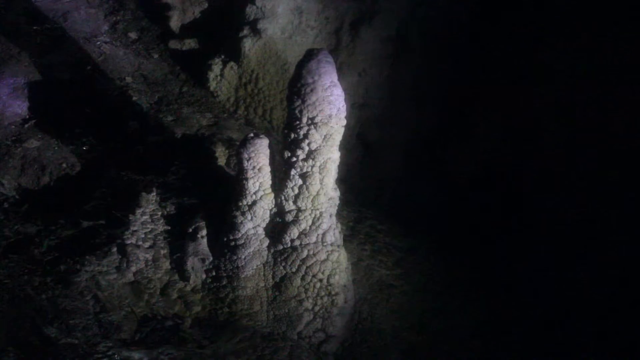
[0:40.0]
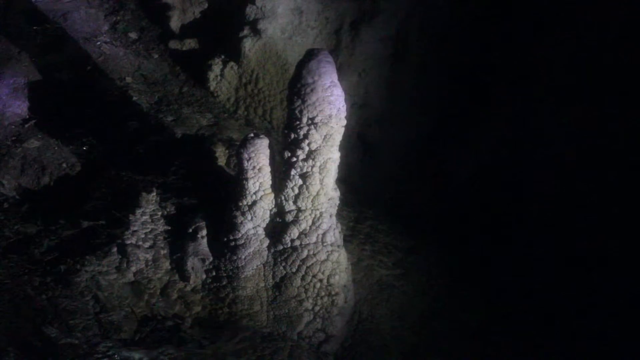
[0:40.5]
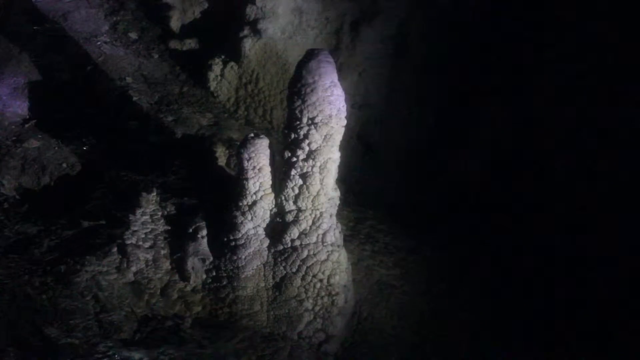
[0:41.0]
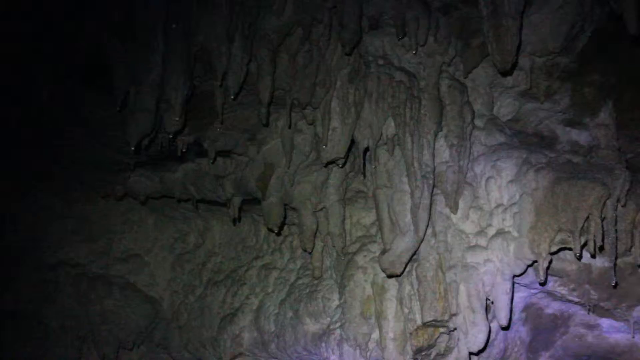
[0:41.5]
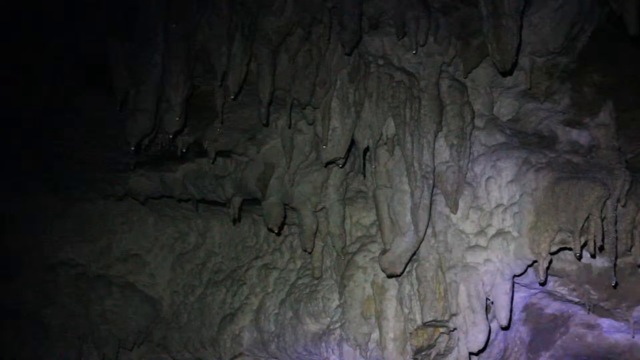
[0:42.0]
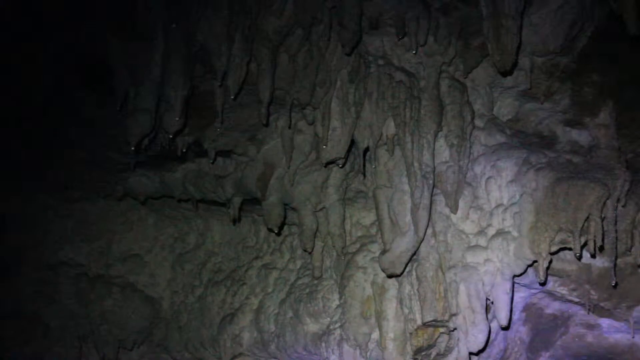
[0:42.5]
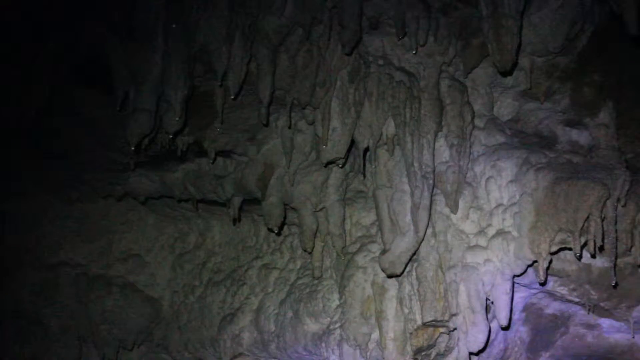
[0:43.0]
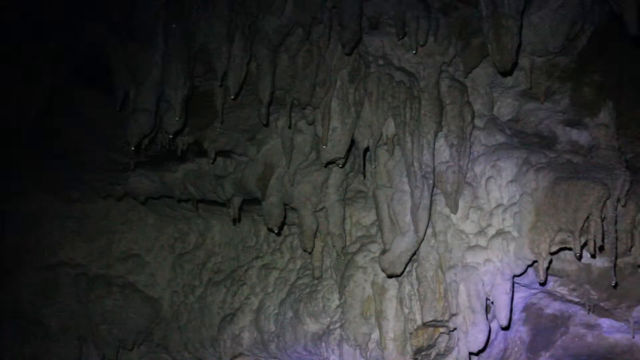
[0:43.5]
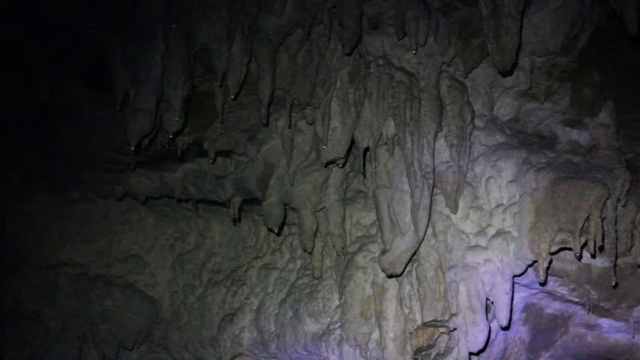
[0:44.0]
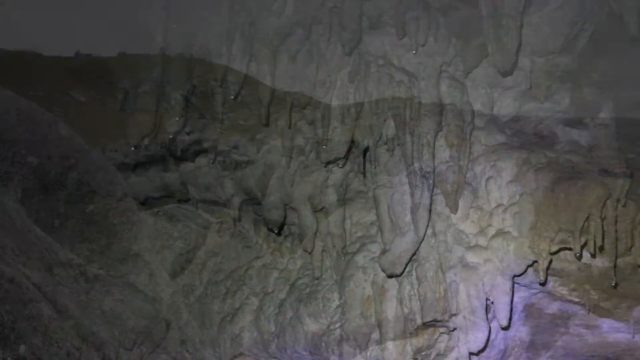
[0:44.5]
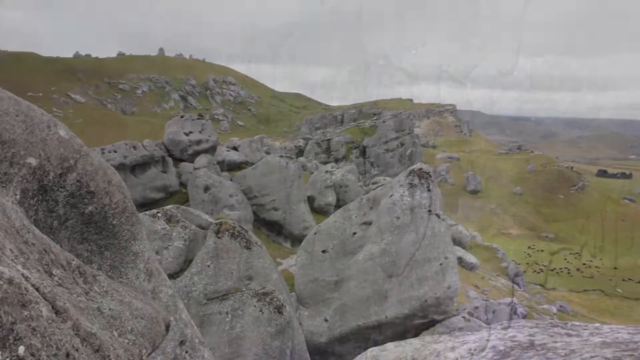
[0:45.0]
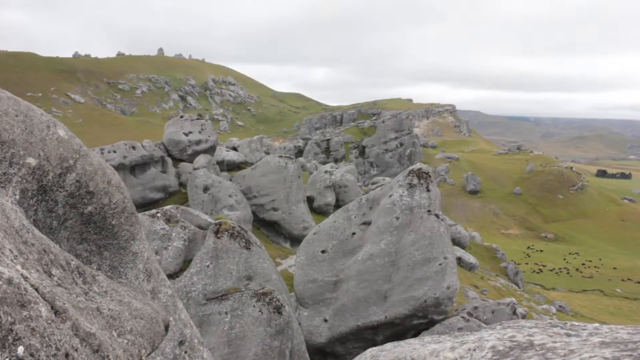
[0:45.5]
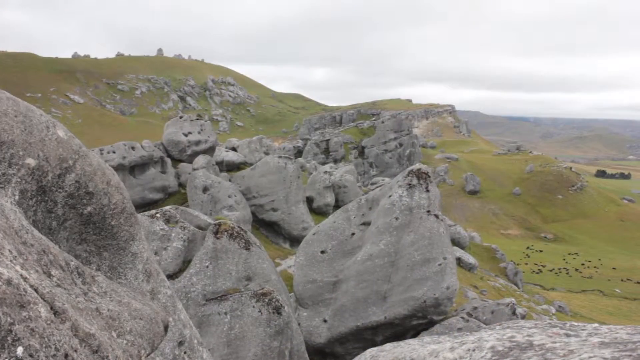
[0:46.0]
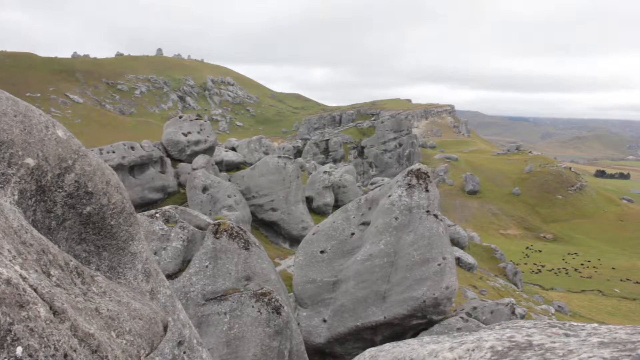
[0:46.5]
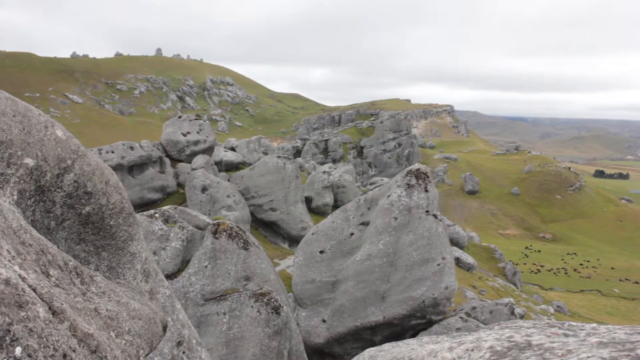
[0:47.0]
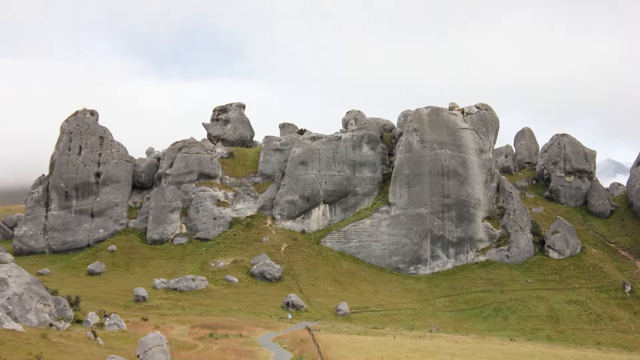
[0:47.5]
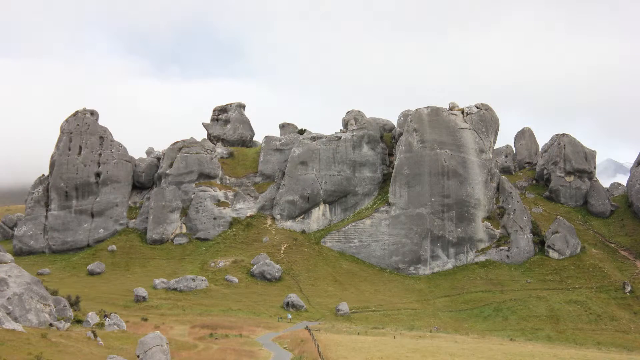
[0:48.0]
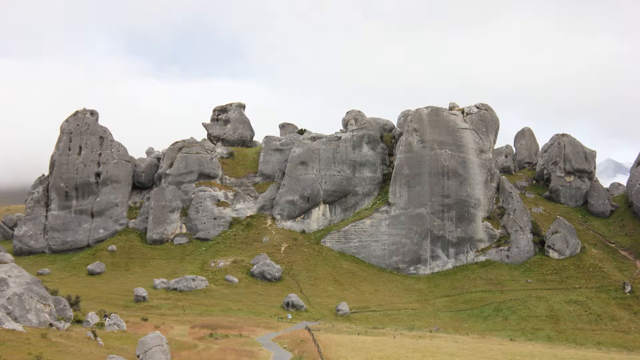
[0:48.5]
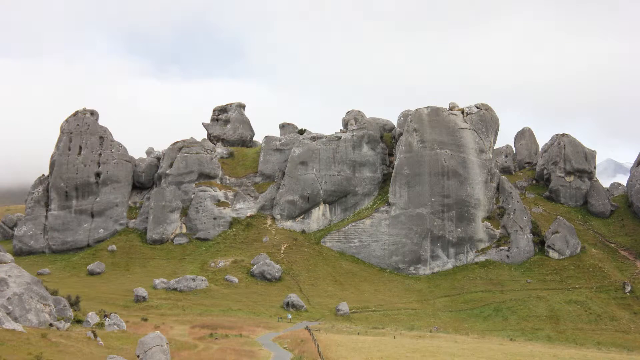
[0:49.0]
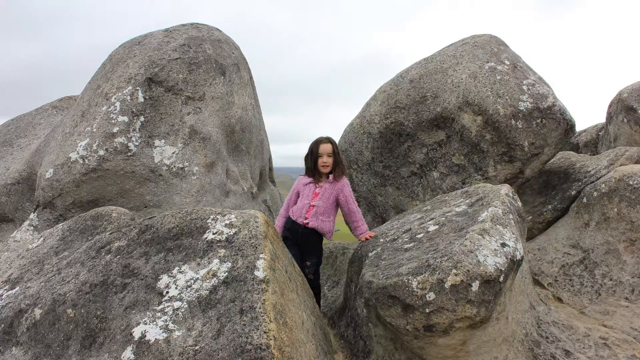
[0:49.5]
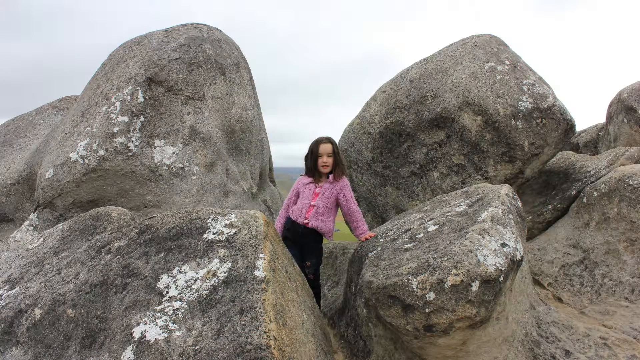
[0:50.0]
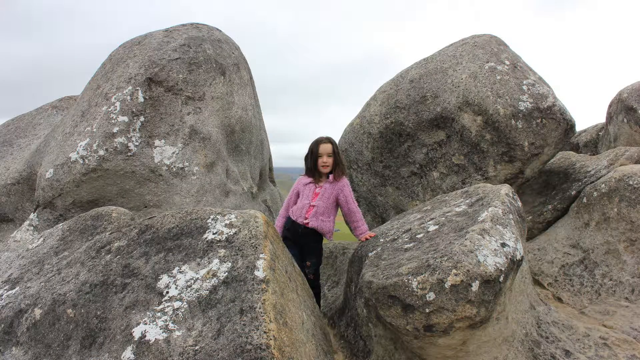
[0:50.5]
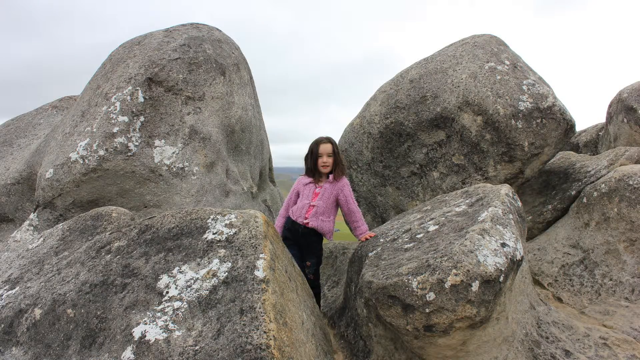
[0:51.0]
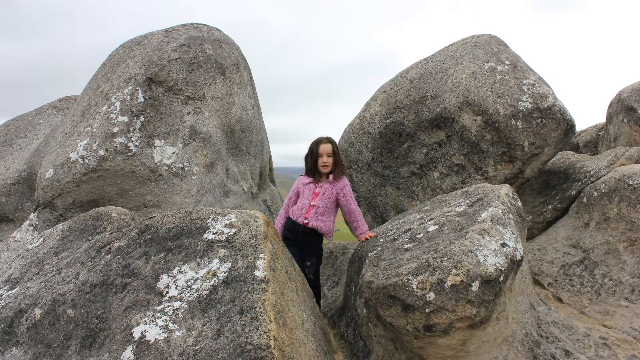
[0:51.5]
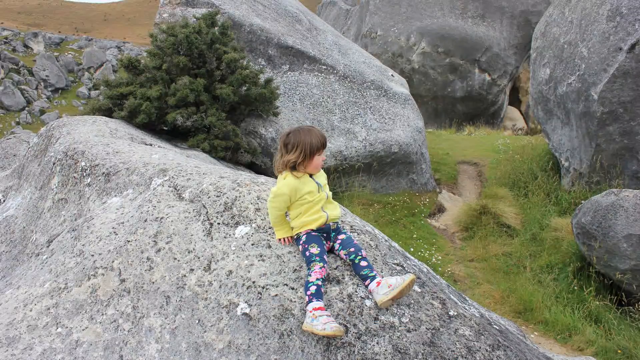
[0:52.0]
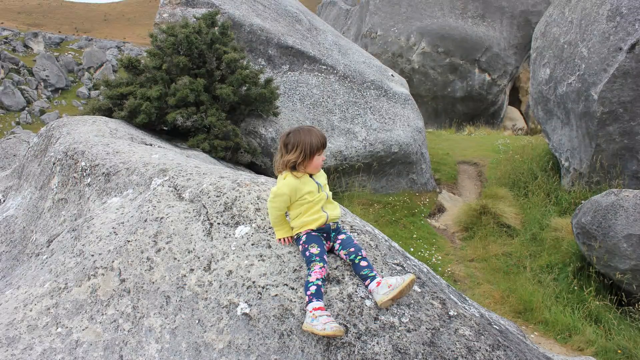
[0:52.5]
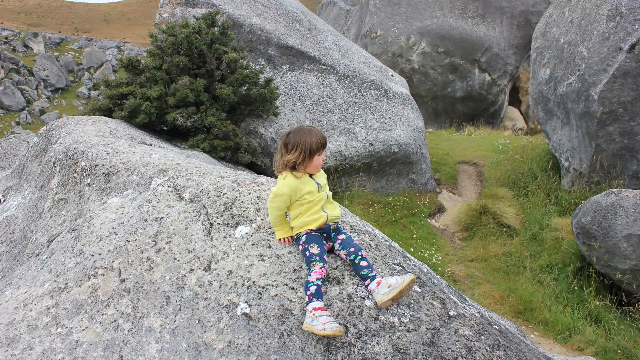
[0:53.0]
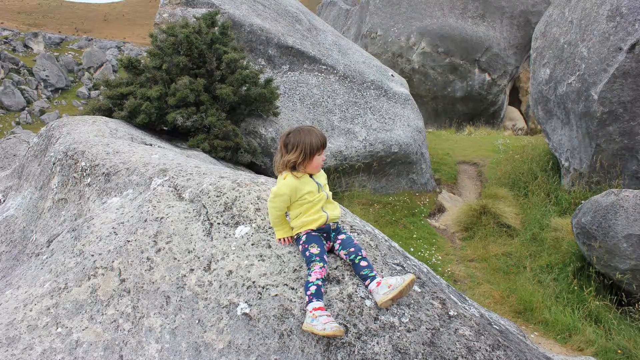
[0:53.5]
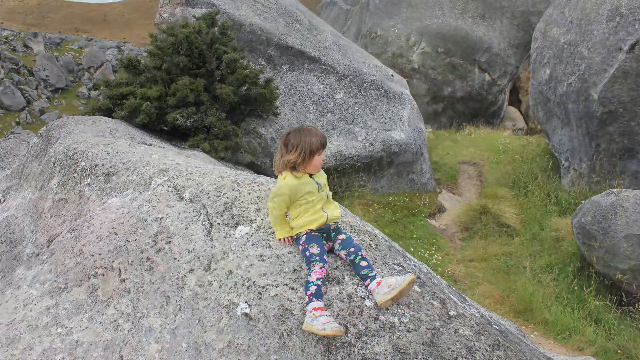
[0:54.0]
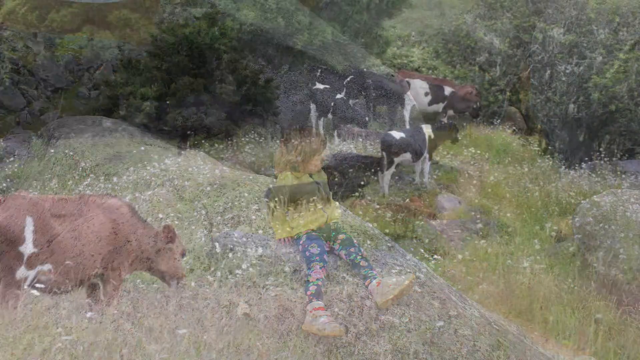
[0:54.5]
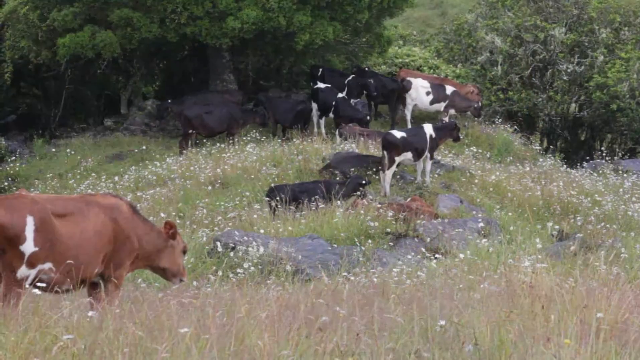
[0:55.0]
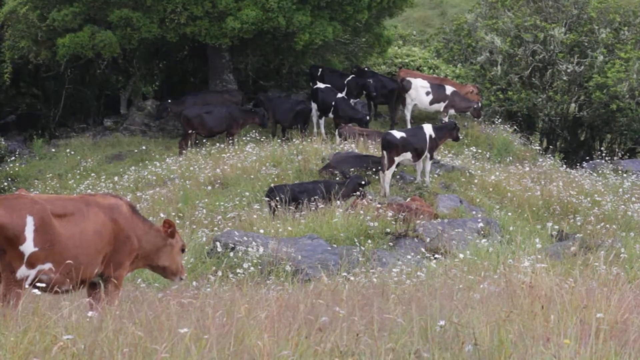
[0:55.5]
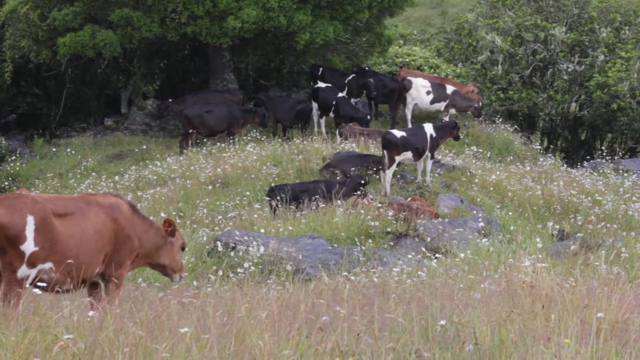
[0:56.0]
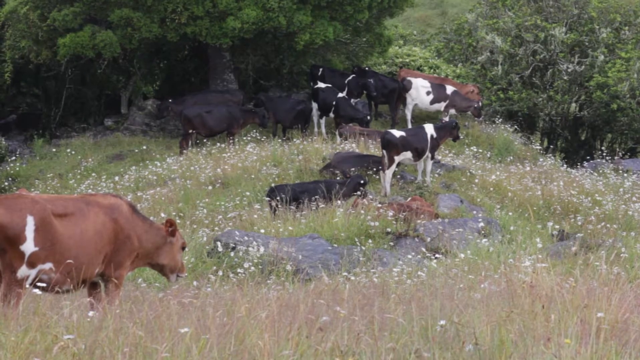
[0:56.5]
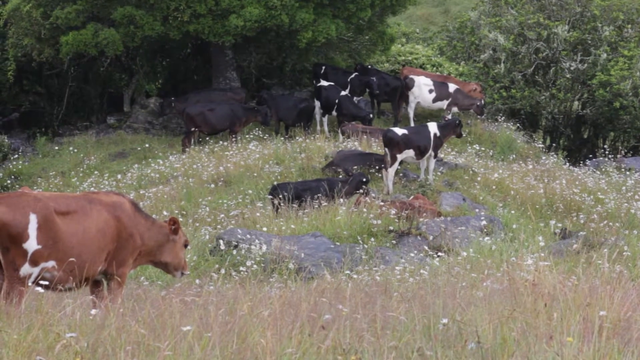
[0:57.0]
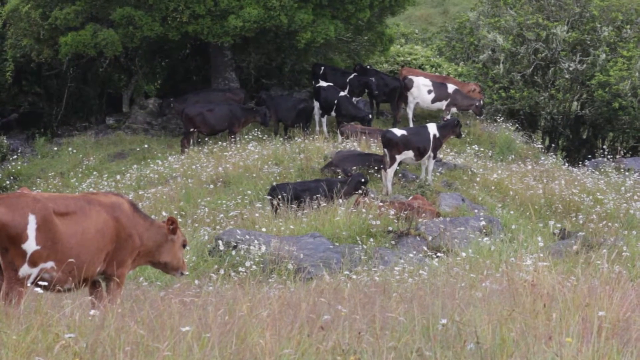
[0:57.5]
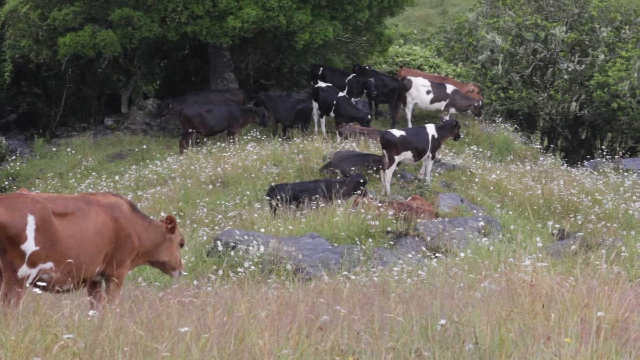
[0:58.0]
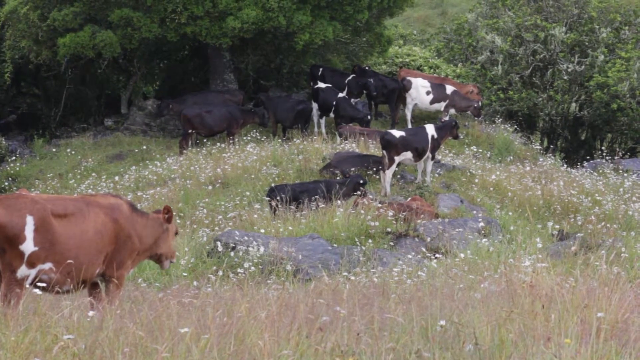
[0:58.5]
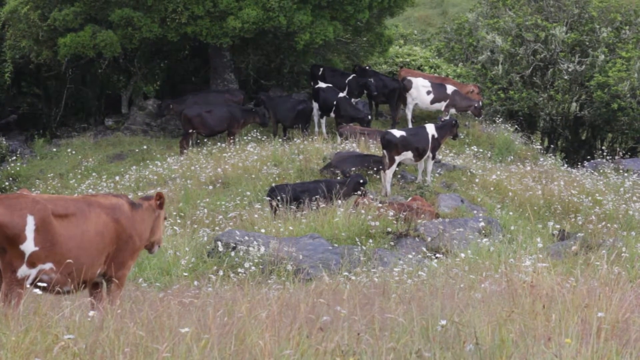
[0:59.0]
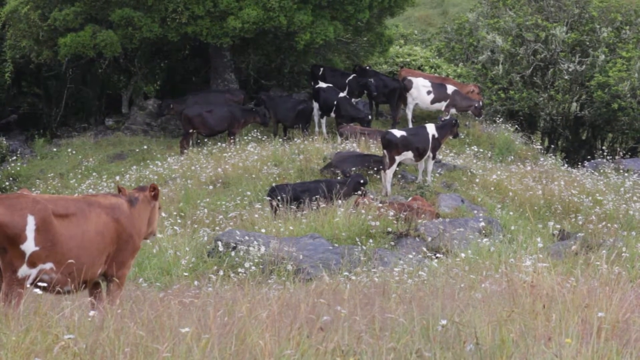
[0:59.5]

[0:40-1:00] More pictures of the inside of the cave are shown before a picture of the outside. This outside seems to be a different location, on a short green hill. The focus is on many rocks, sort of a mix of square and triangular pyramid-shaped rocks, perhaps about the size of a full-person body or two stacked lengthwise, though it is hard to judge without a point of reference. Then a different view shows sort of a cliff wall in the same area. Next a woman stands by a rock, showing the rocks are a bit wider than one or two humans, though seemingly similar lengthwise; she stands between two sections of rock, in sort of an opening. Then a child sits on one of these rocks; the child has brunette hair, a yellow jacket and flowery blue pants.